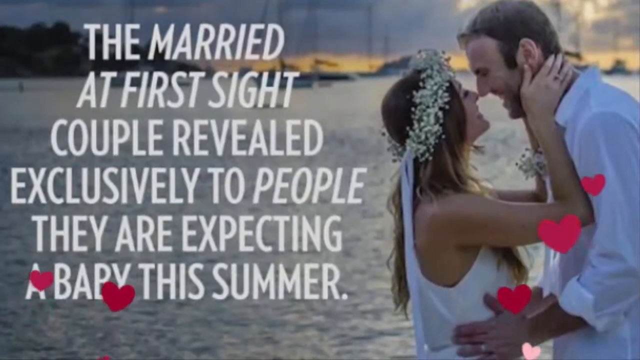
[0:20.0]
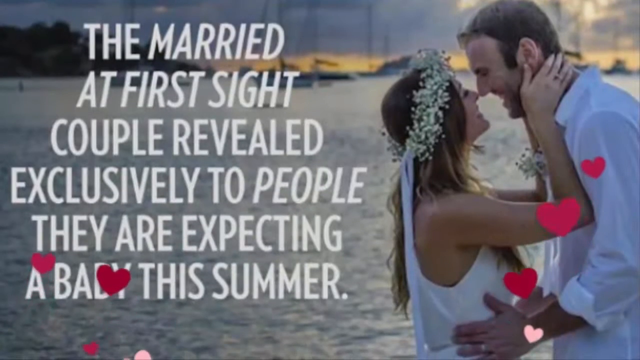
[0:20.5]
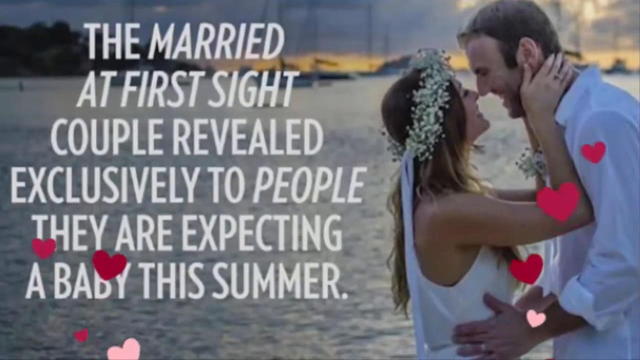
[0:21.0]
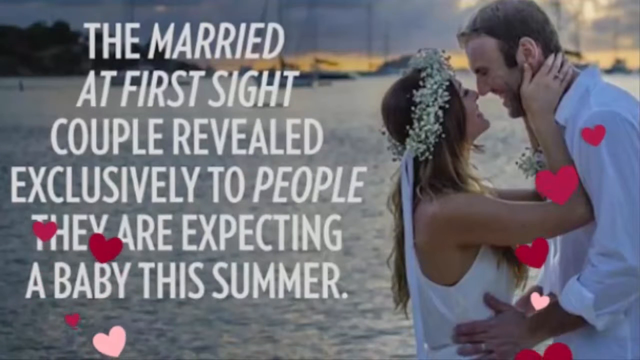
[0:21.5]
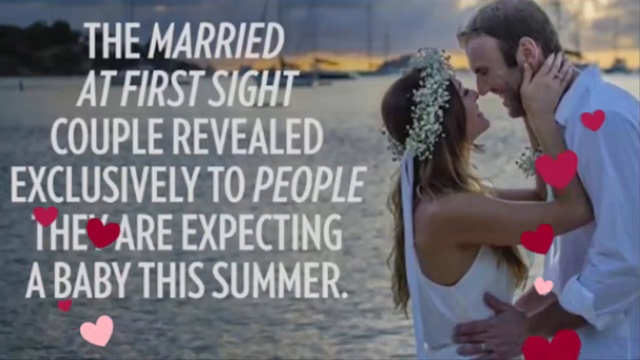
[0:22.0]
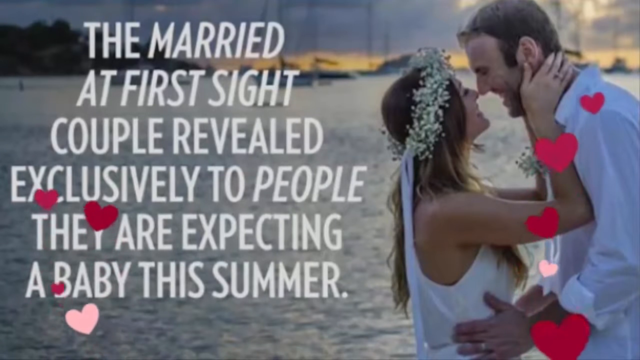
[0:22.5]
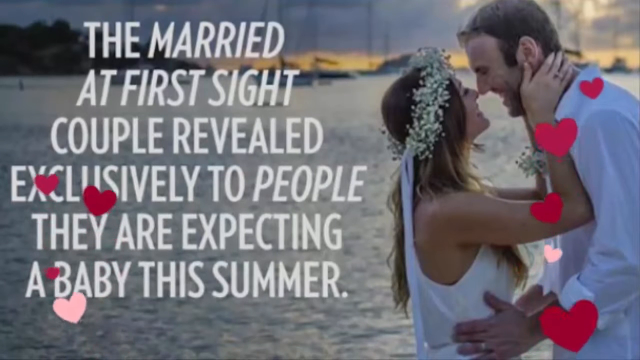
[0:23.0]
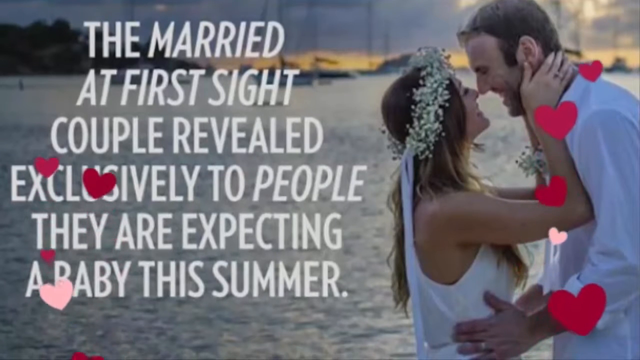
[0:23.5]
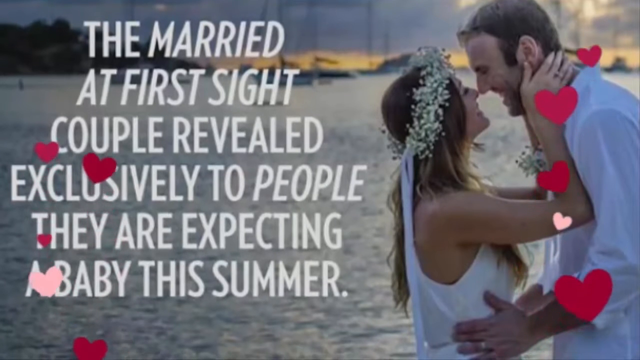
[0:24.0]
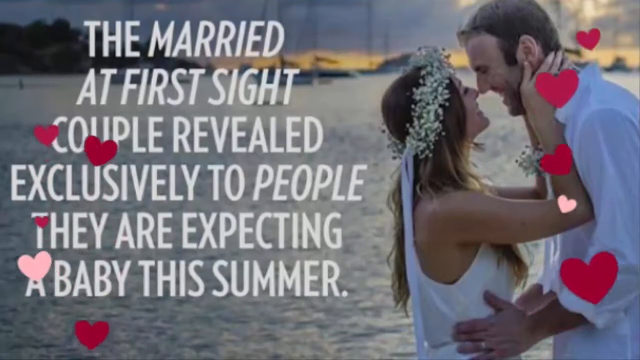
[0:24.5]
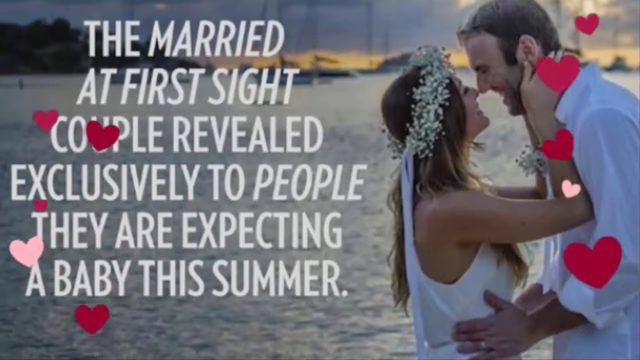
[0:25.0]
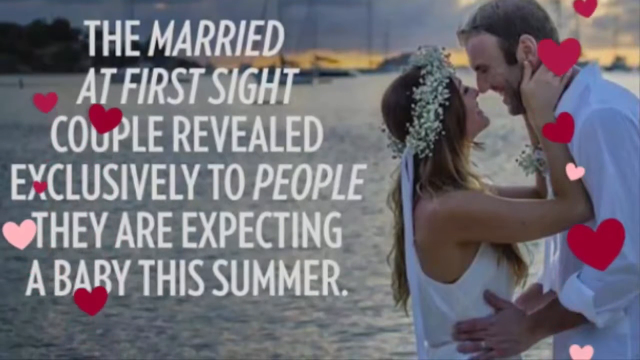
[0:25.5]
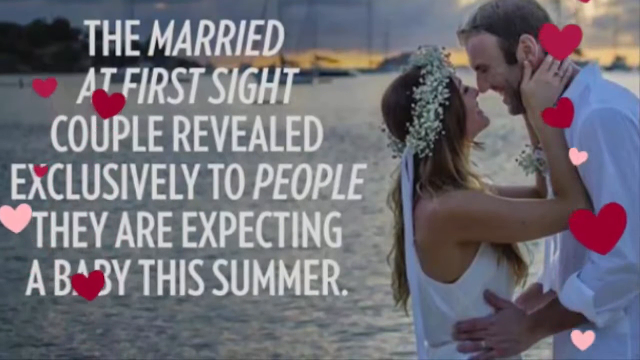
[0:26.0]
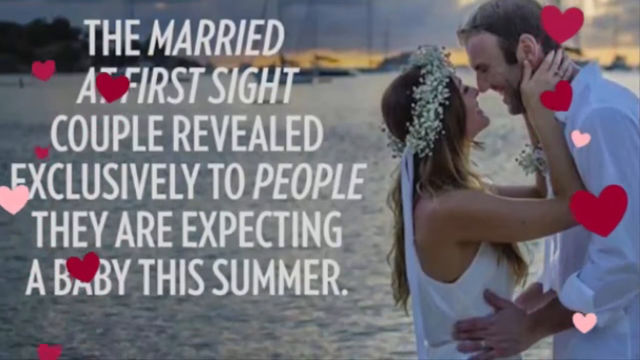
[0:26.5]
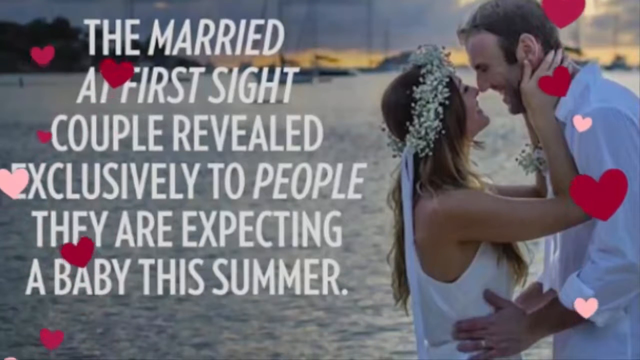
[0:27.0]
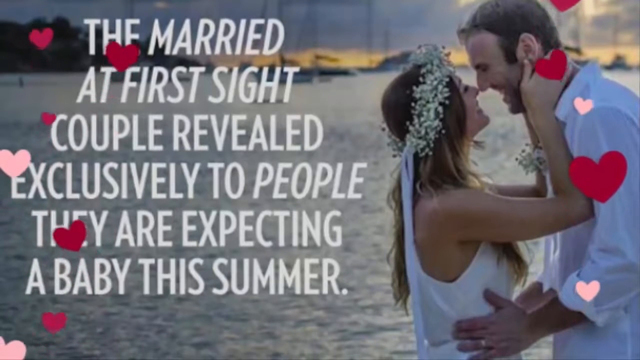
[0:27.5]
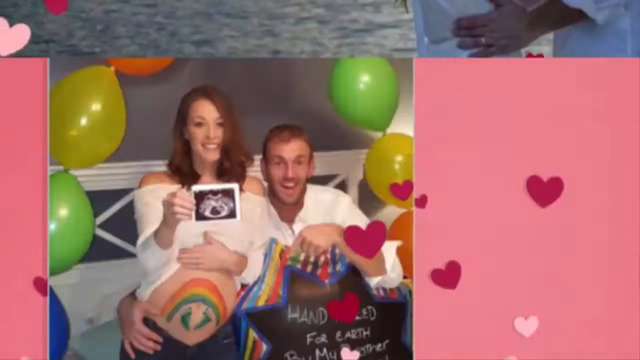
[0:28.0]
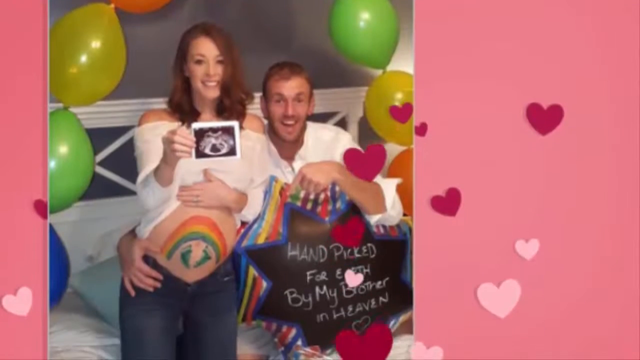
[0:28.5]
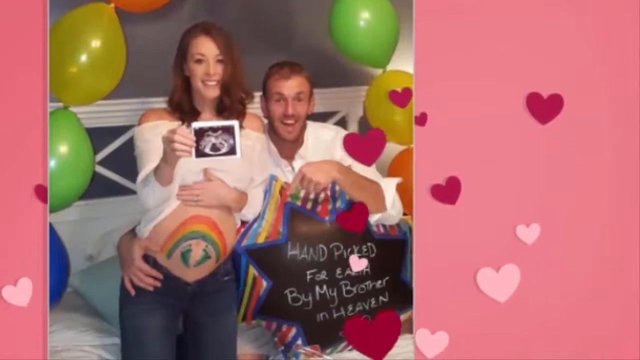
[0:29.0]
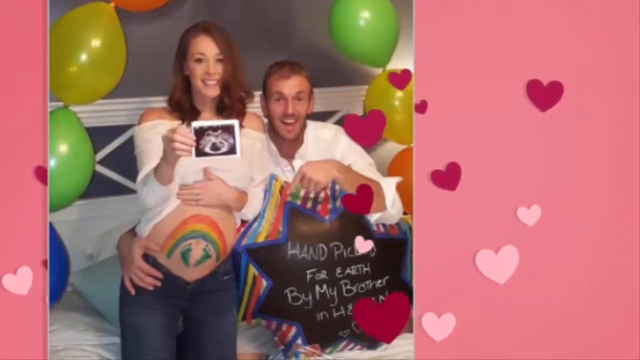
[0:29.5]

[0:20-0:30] Two people, apparently a couple, are kissing; the woman is holding the man's neck and the man is holding her hips. Beside them, a post announces that they married at first sight and are expecting a baby this summer. The video shows the picture in detail while pink and red love images and pink and red flowers fly over it. Another picture shows the couple sitting on a bed with balloons on either side, dressed in white with black trousers. The man seems to be holding something that looks like a gift, and the caption reads "thank you for art by my brother in heaven". The man looks excited; the woman, also looking excited, holds a picture and is pushing her belly, seemingly pregnant.